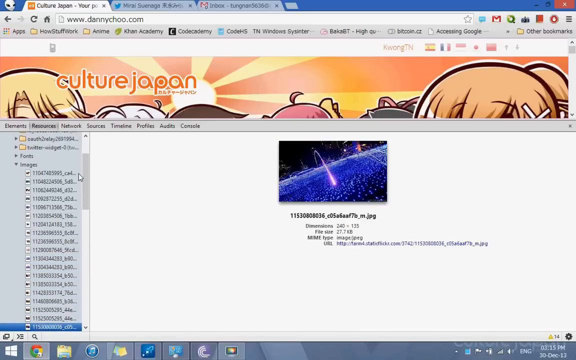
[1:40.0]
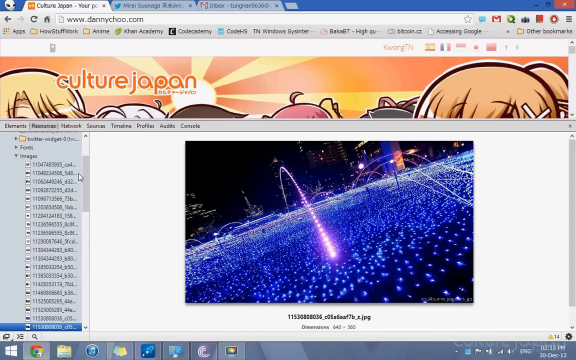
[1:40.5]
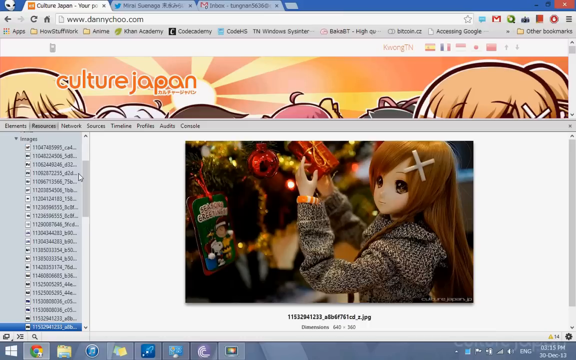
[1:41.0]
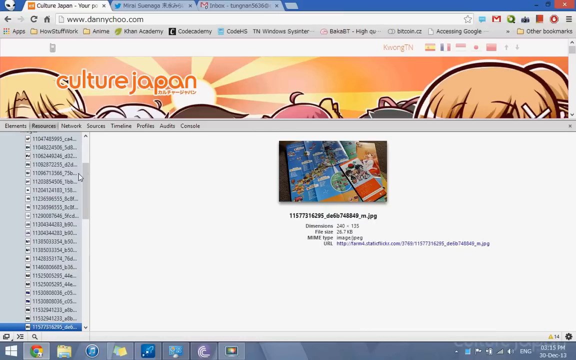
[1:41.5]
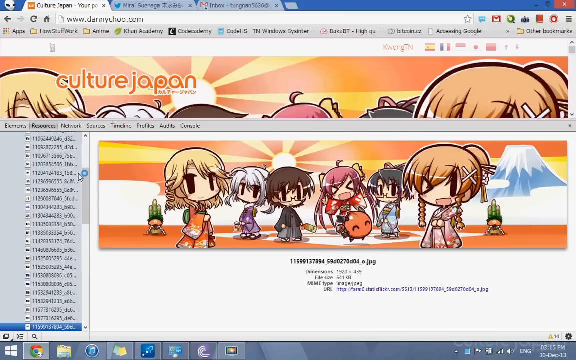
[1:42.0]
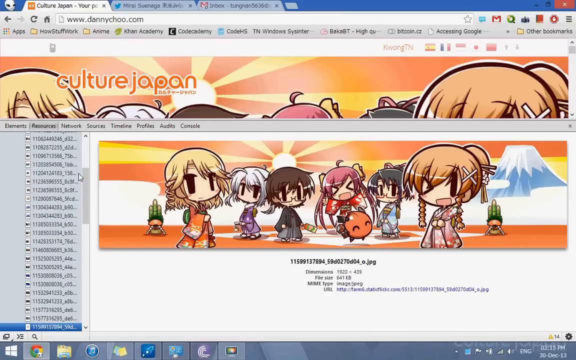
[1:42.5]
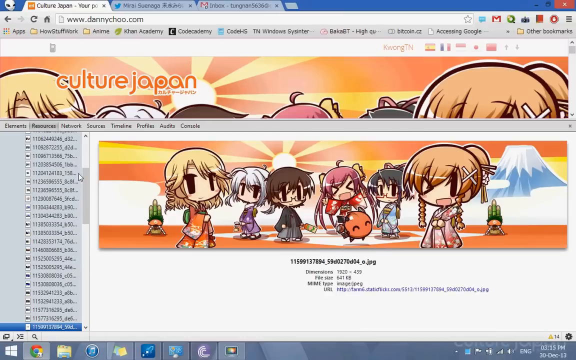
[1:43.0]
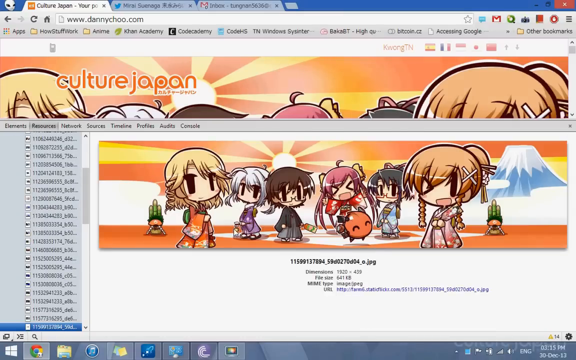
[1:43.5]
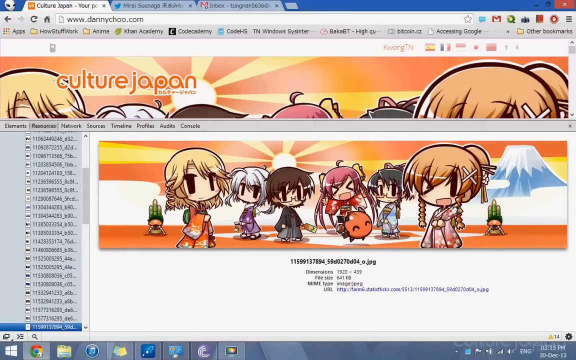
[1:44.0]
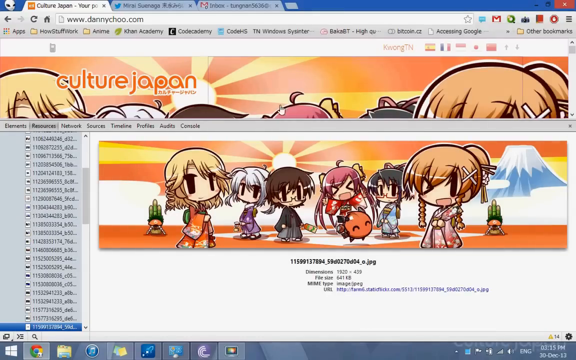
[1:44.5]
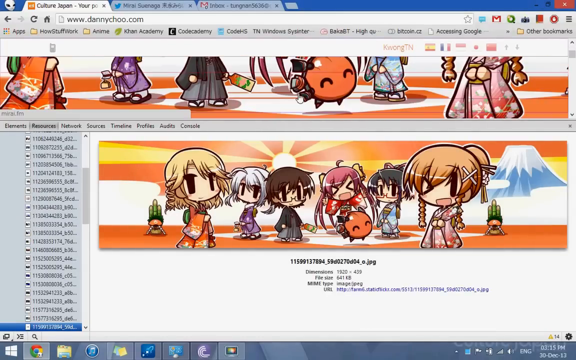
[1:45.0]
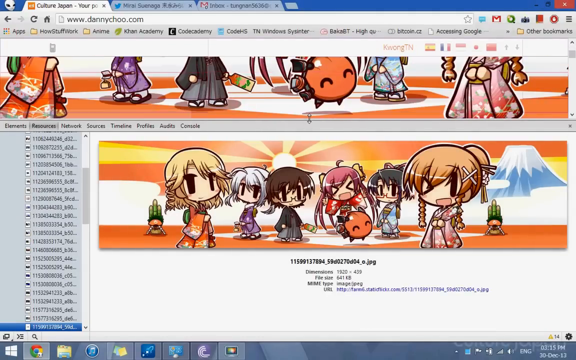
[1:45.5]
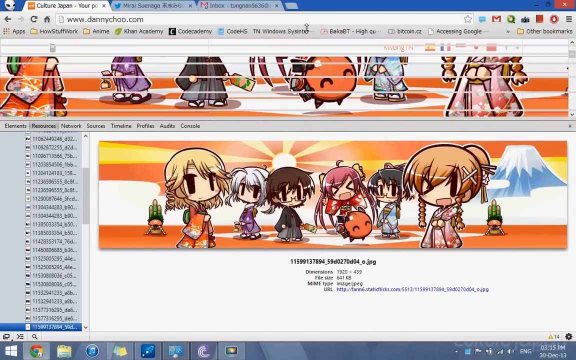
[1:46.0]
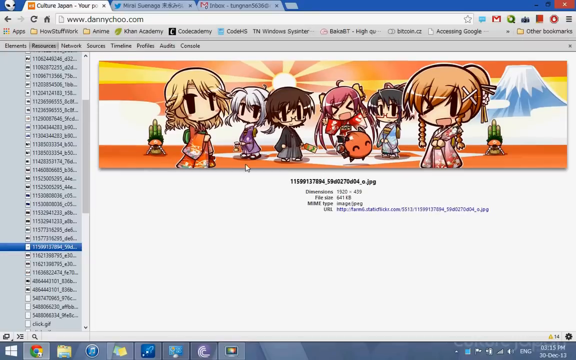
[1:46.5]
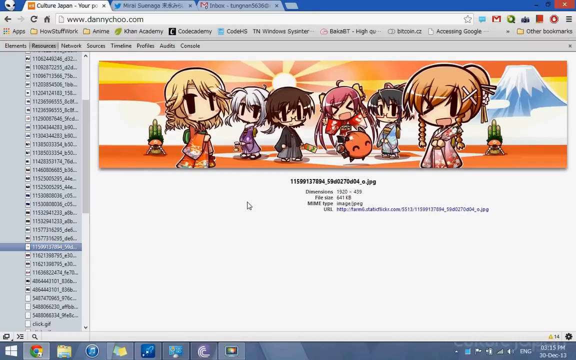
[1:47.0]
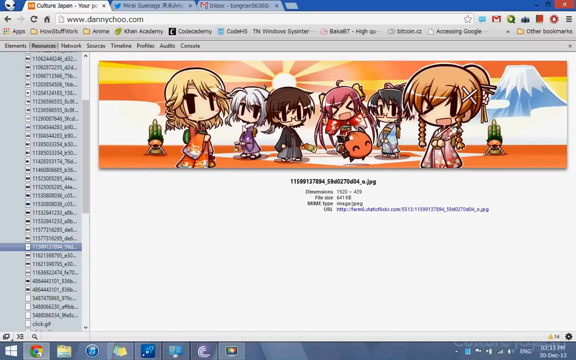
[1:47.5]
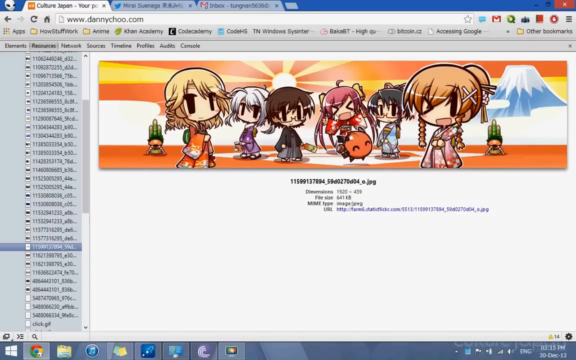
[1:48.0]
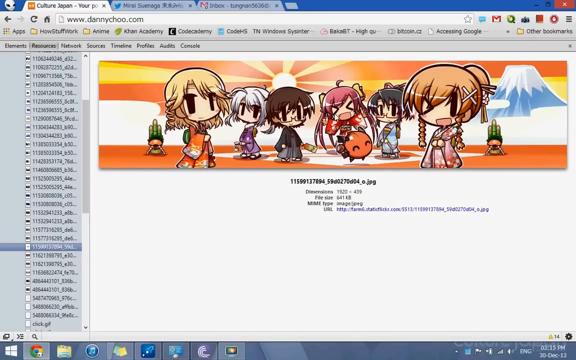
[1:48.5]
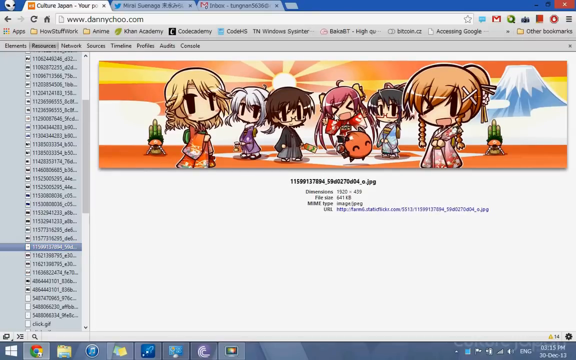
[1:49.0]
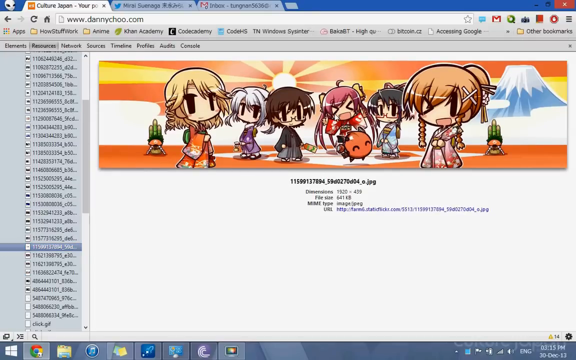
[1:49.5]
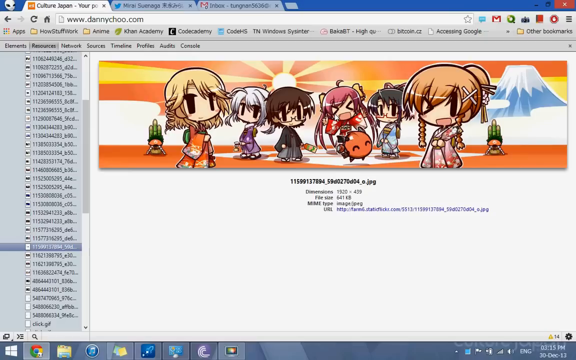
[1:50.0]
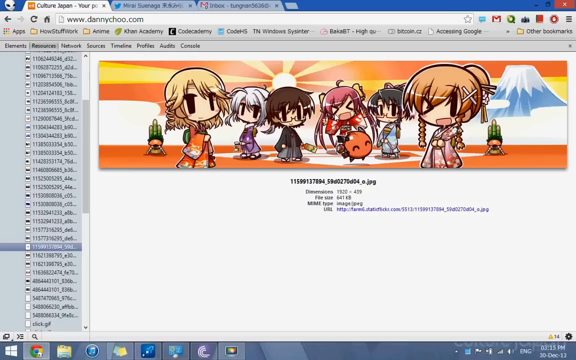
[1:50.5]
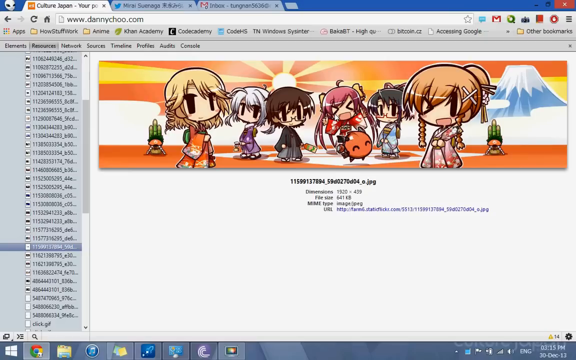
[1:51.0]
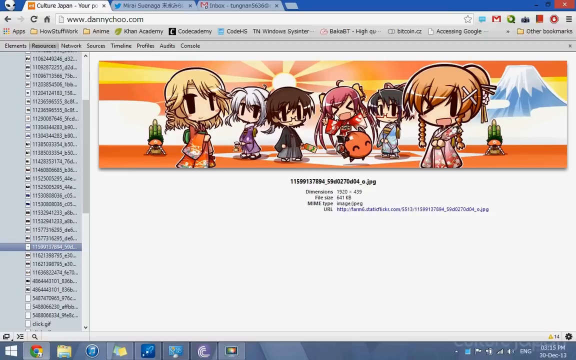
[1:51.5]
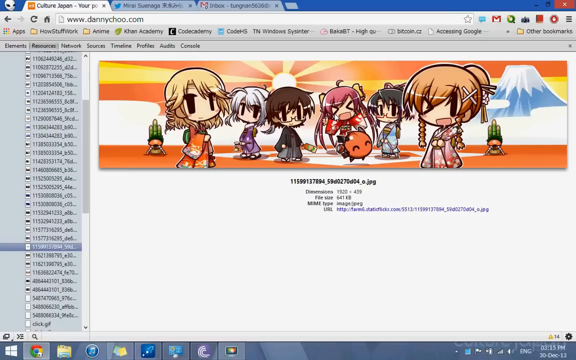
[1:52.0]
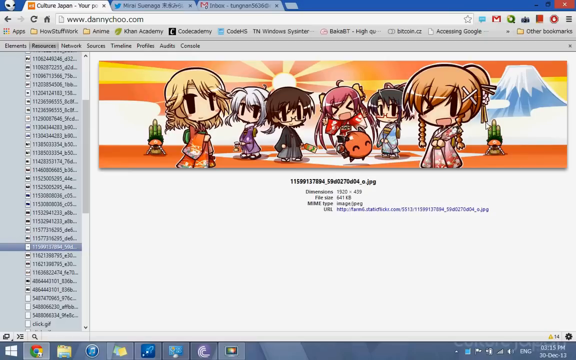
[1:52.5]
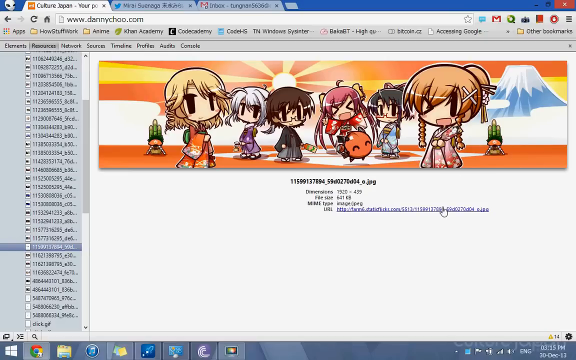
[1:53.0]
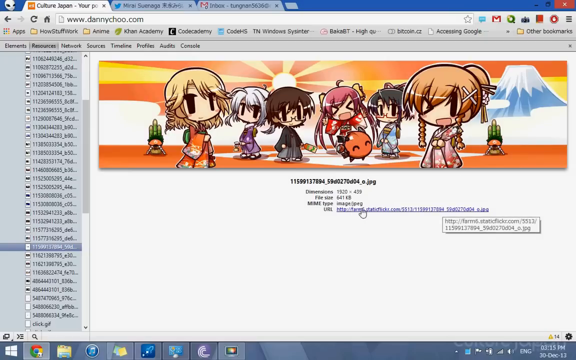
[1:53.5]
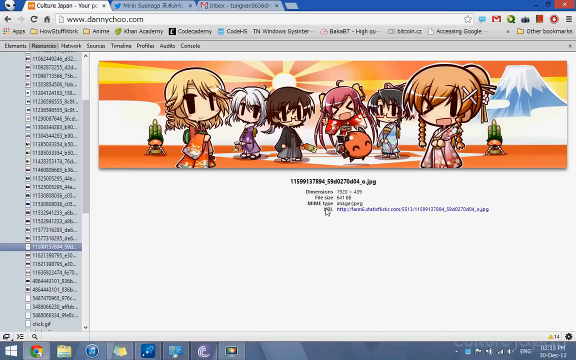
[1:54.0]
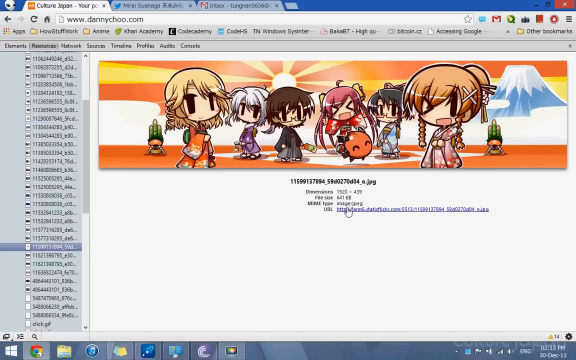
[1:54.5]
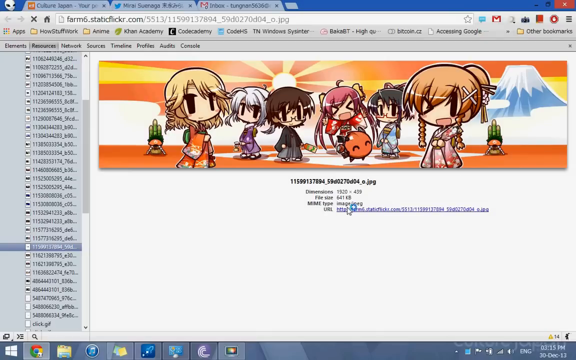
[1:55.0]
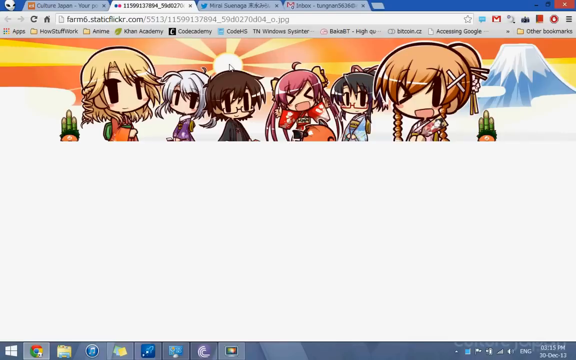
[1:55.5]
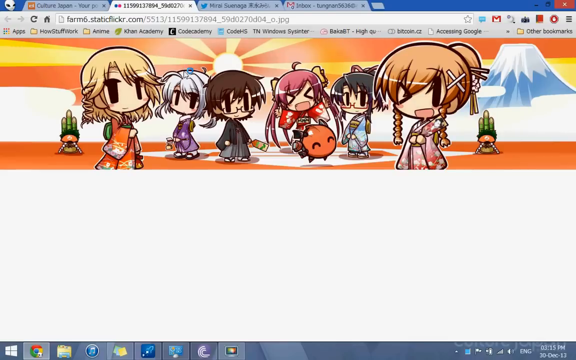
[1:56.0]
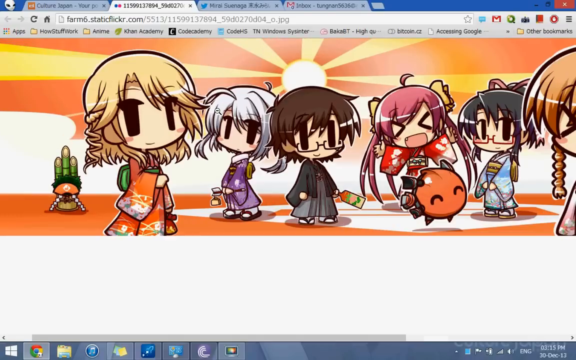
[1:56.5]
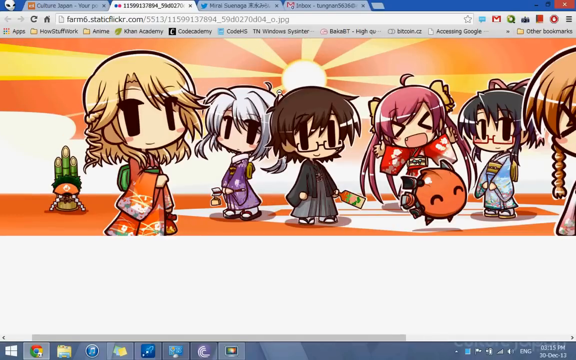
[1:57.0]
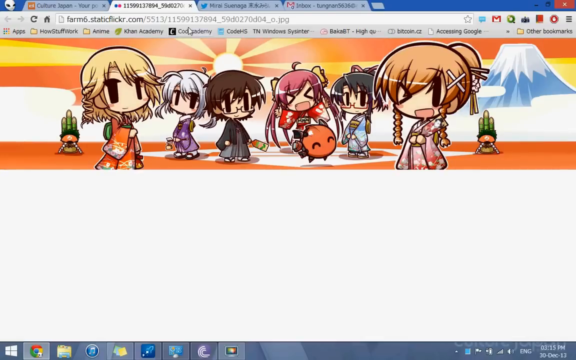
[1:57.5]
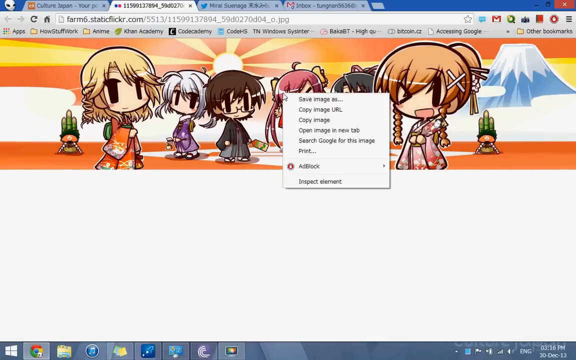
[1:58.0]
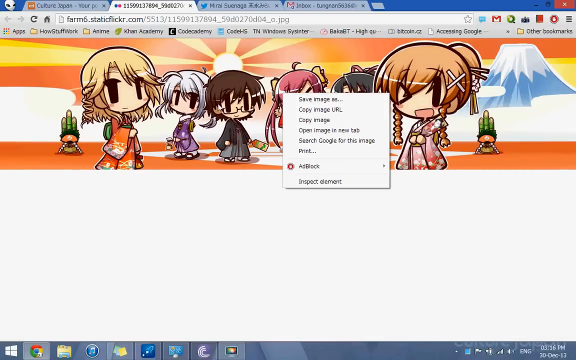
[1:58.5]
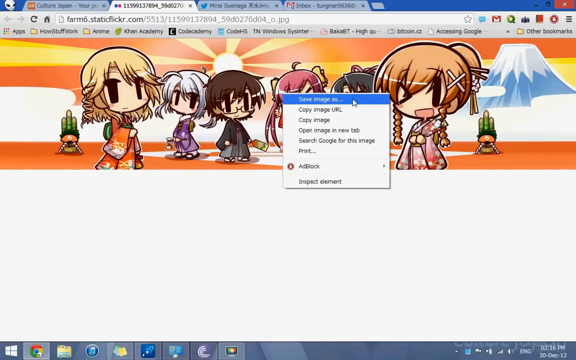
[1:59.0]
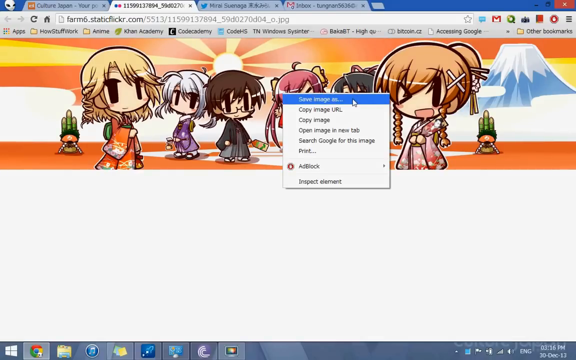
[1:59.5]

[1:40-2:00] Within the images section, the view goes back up to the header, and different parts of it are highlighted; the header apparently is one of the images. Its dimensions and file type are shown. An embedded link for the header is clicked and right-clicked, and "save image as" appears. A different image then pops up, showing a doll, like an anime Barbie-type doll, with long auburn hair, bangs and big brown eyes. Her hands are up next to a fake Christmas tree with lights and ornaments on it, and she holds what may be a wrapped Christmas present, reaching up toward the tree. One ornament has "seasons greetings" on it along with Charlie Brown and Snoopy.